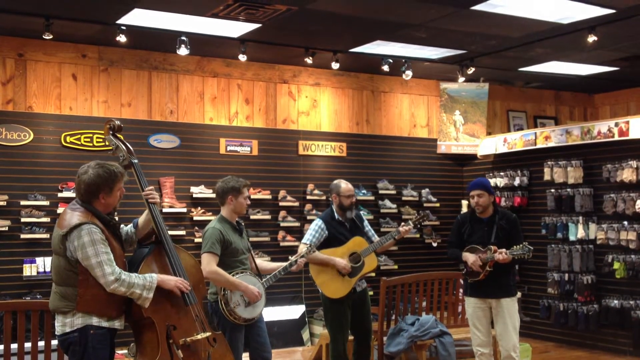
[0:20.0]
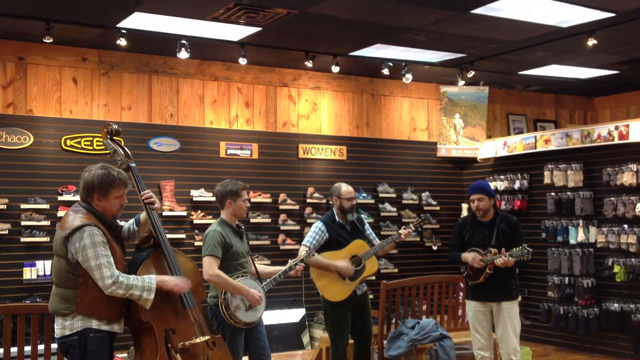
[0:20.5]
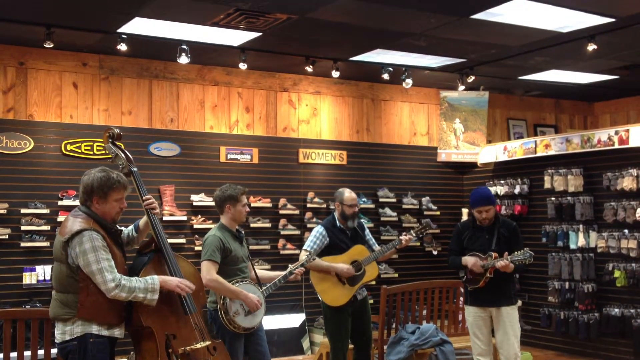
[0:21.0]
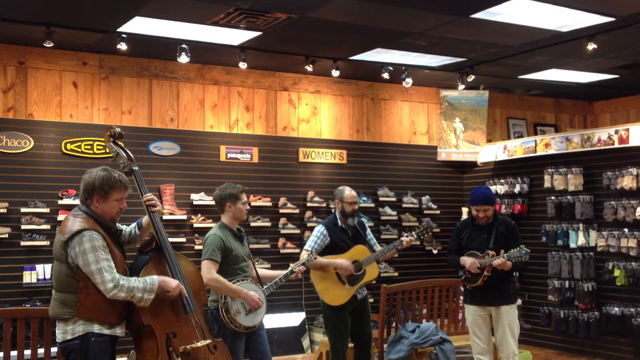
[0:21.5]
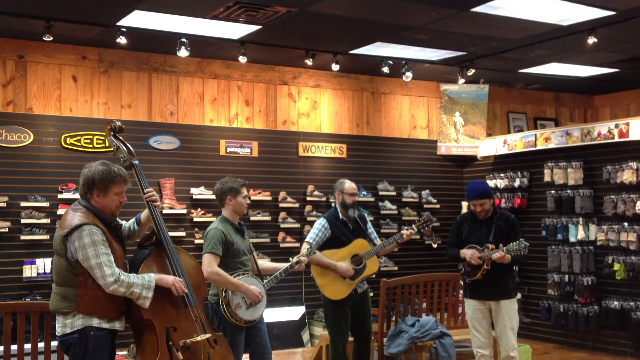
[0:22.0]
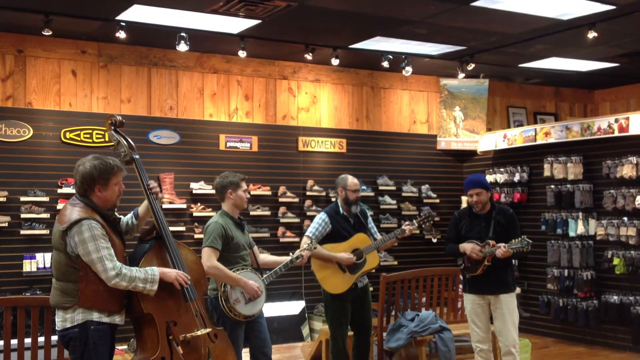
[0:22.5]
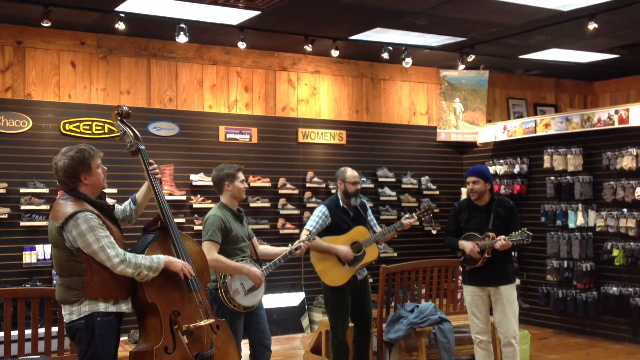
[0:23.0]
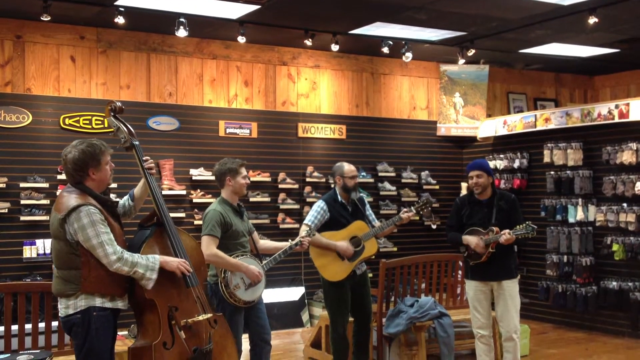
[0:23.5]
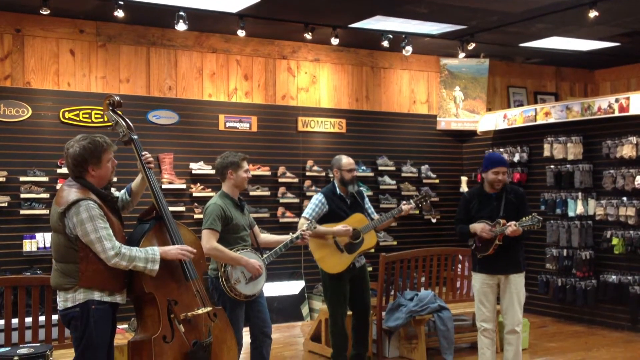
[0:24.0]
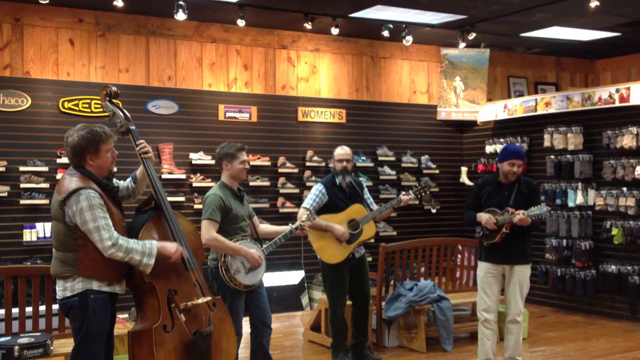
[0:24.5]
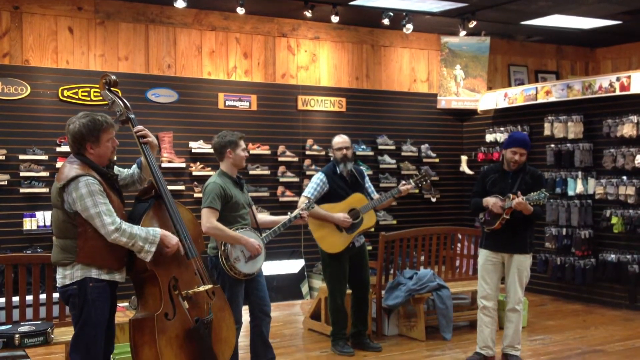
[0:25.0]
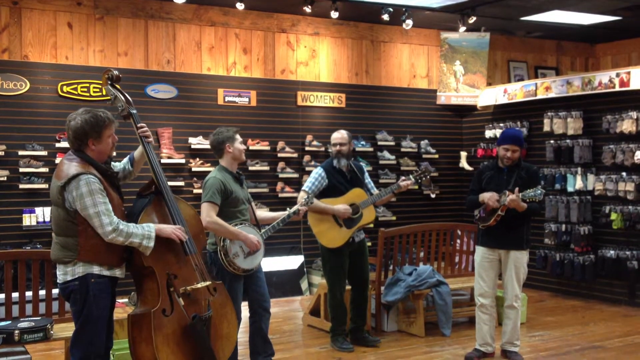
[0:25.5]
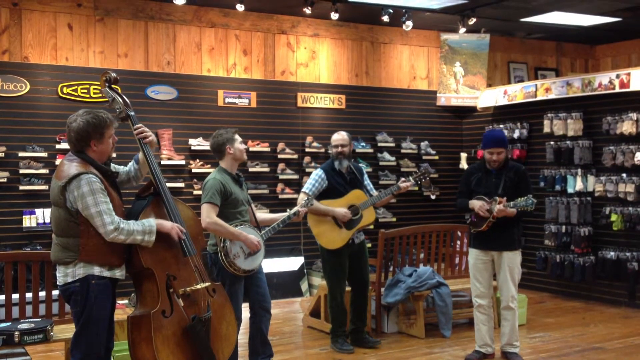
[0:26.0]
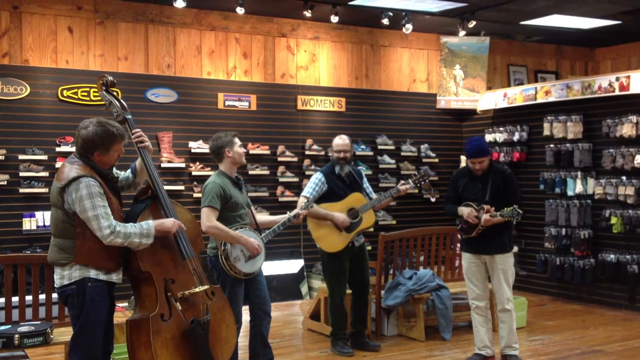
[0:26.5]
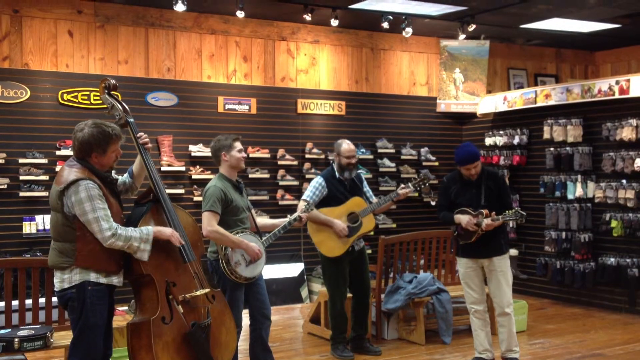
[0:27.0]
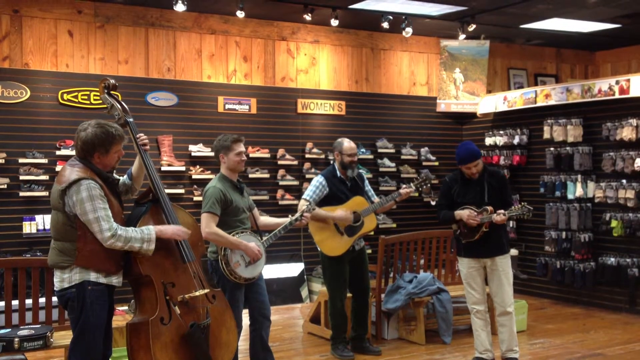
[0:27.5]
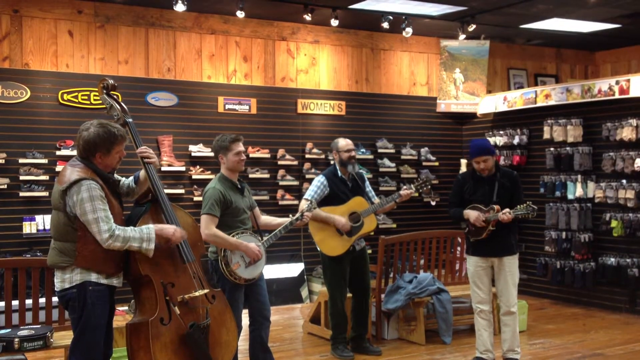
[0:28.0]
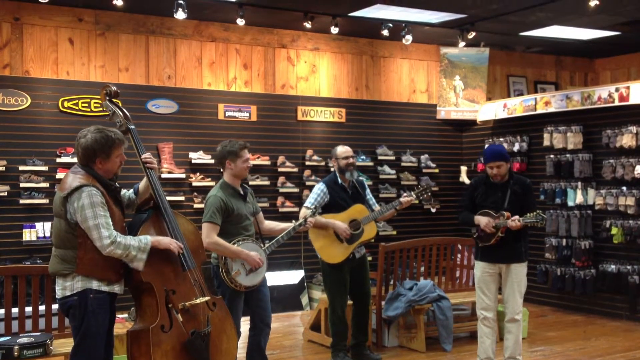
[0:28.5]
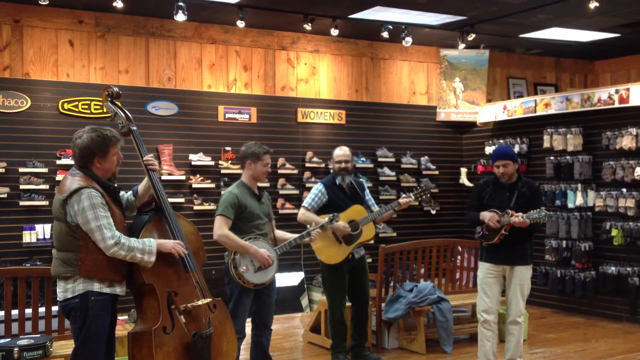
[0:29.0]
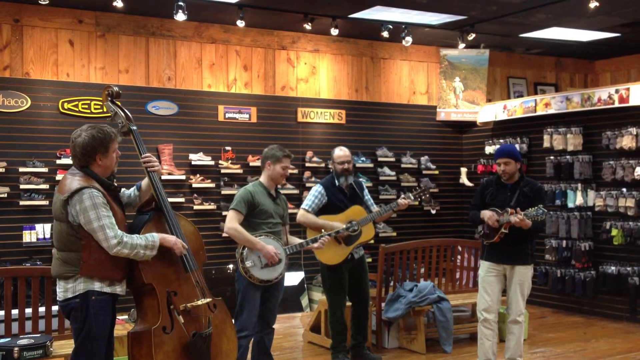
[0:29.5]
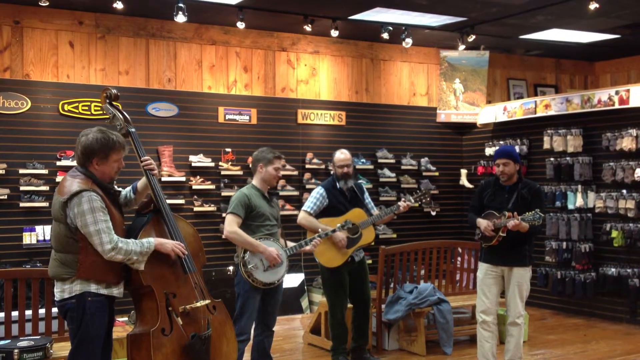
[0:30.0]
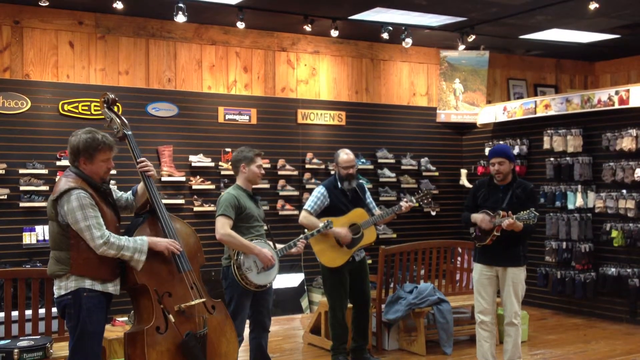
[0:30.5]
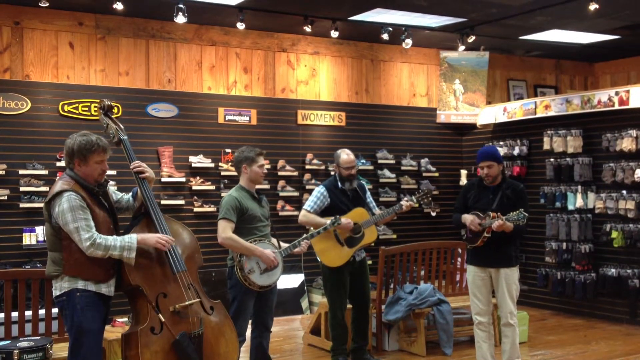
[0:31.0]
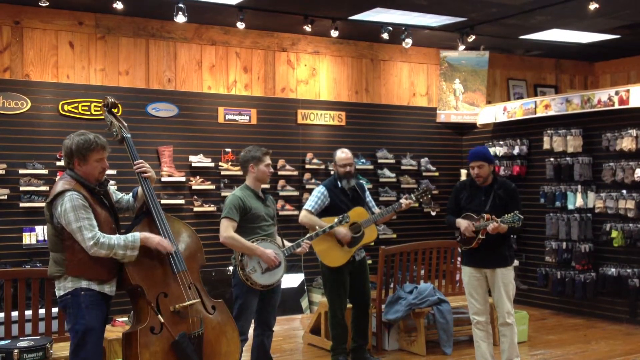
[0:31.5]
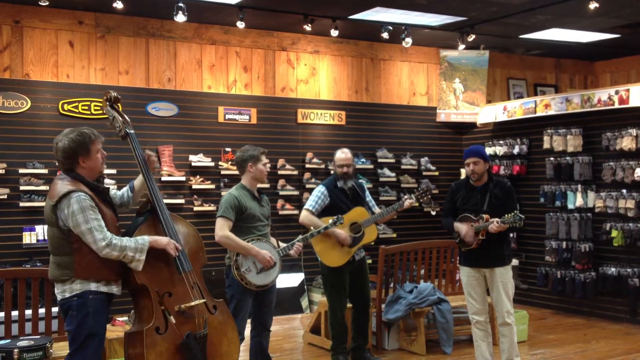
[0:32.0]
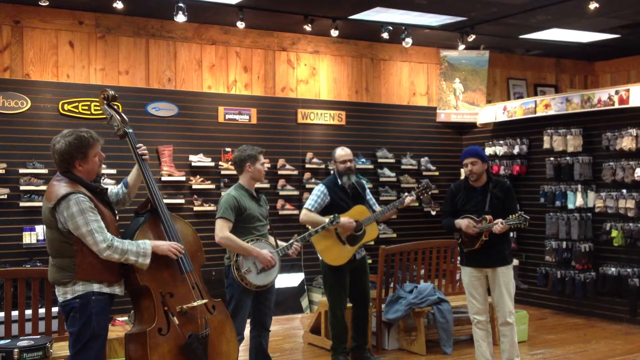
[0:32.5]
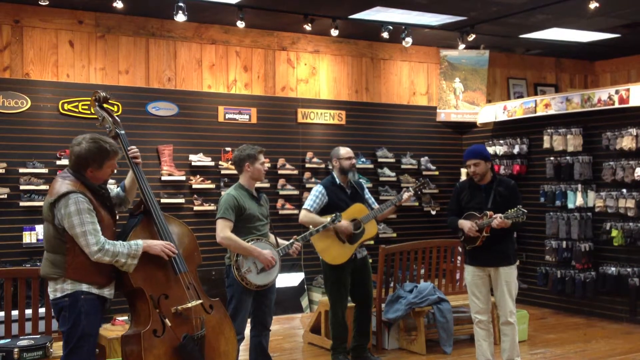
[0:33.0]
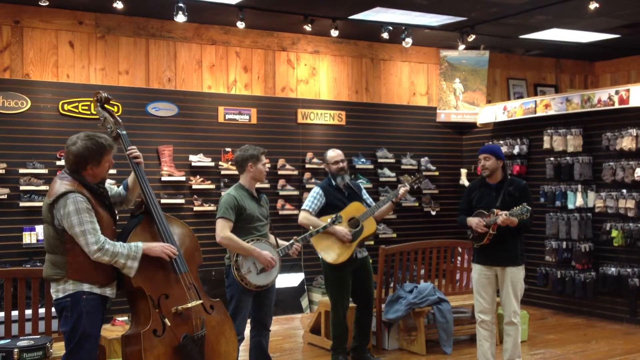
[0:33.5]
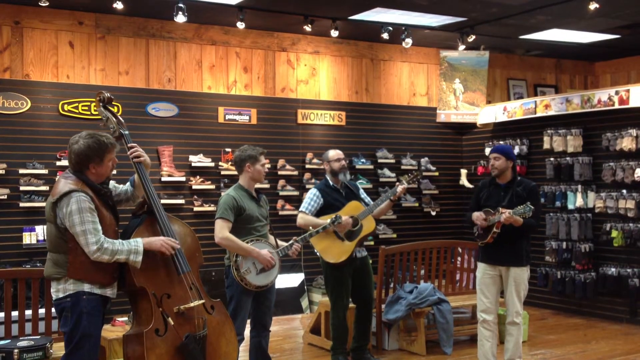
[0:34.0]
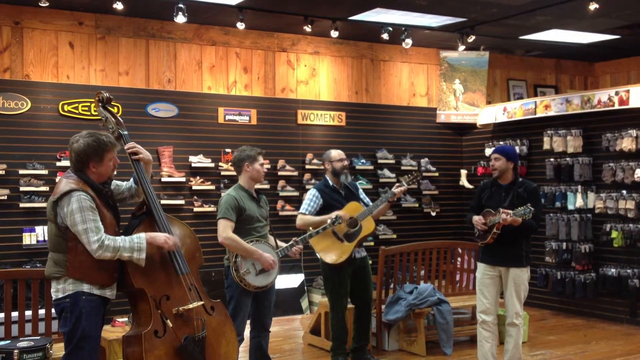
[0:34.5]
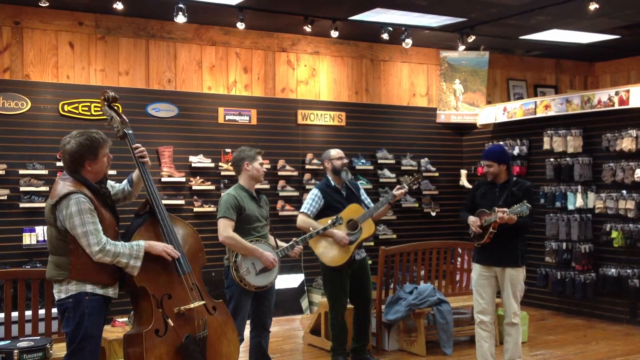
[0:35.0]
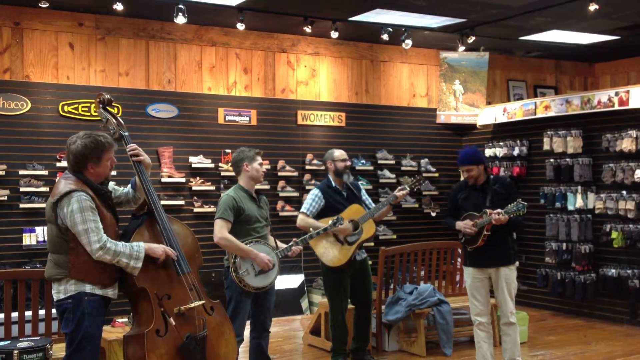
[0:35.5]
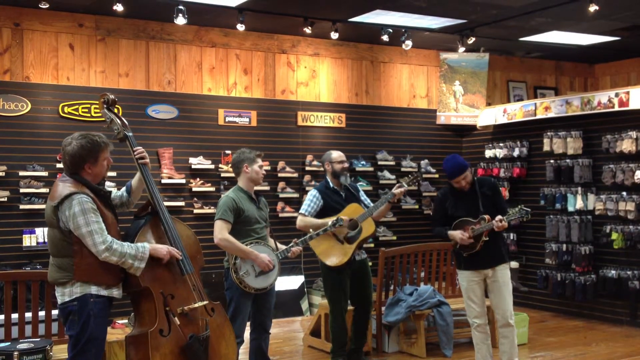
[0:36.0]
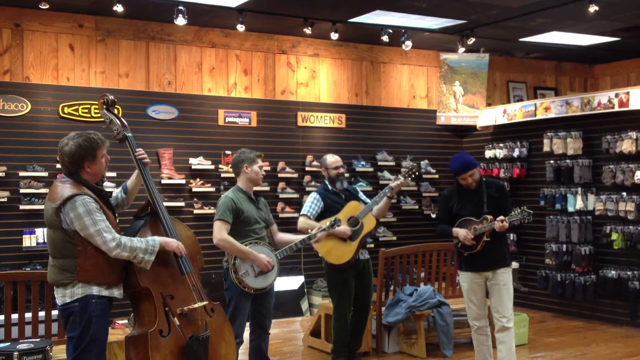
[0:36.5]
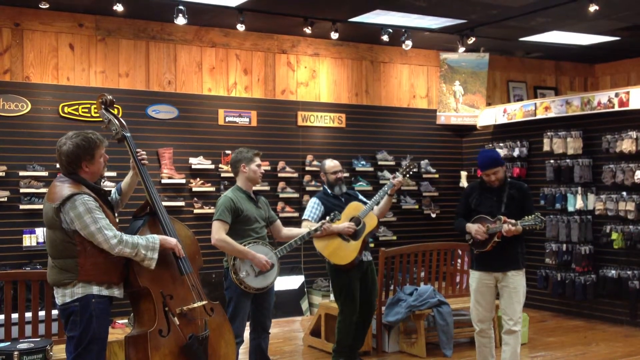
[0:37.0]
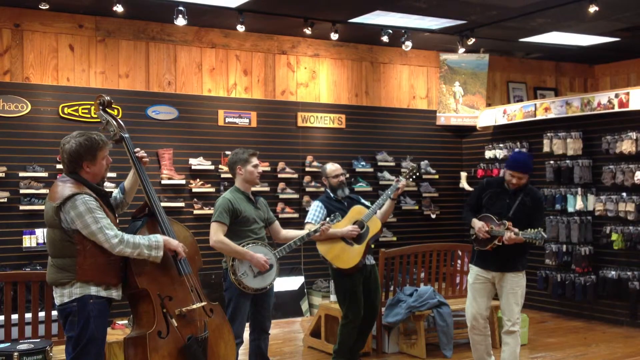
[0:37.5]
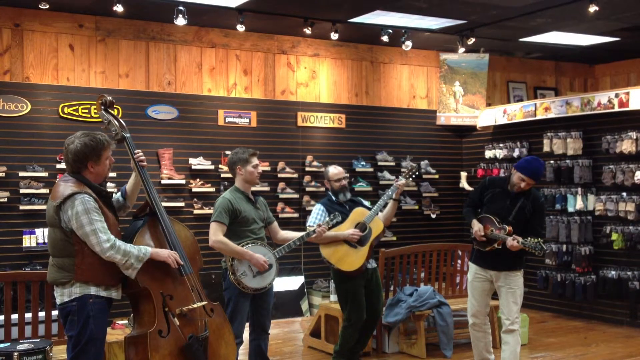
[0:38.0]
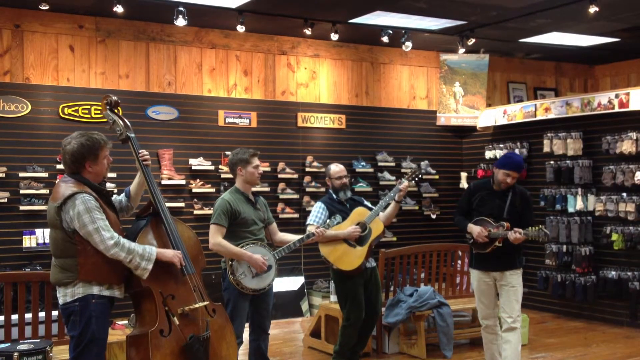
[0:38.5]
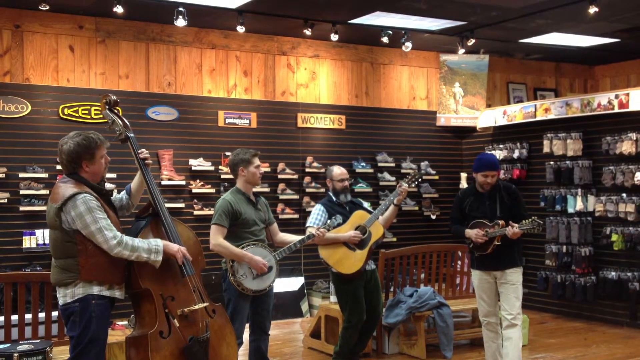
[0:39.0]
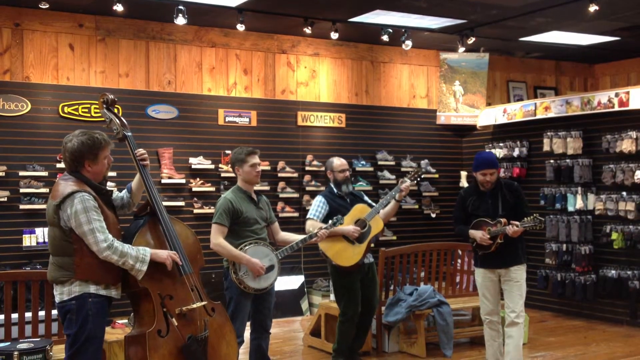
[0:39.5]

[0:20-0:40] The four men keep playing and get a little more into it, moving more as they play. The man with the short, mandolin-looking guitar, who was singing, keeps singing, and the man playing the acoustic guitar starts singing as well. The man with the small guitar seems to be the leader of the group in some sense, since the others look at him as they play, almost as if looking for direction, though he gives none and just sings and smiles. They are all smiling and clearly enjoying themselves.